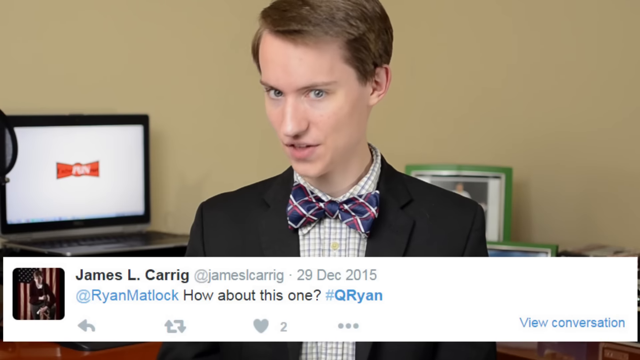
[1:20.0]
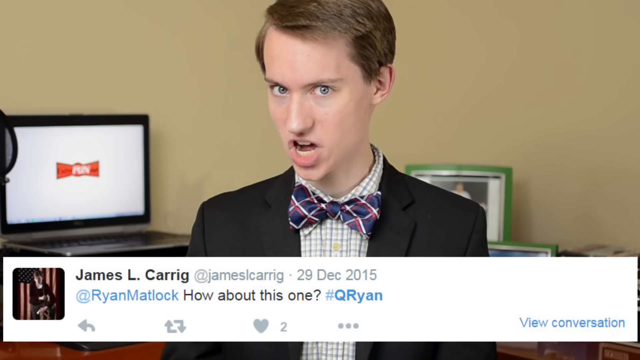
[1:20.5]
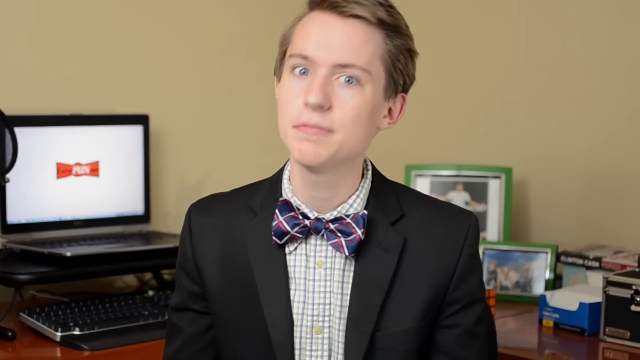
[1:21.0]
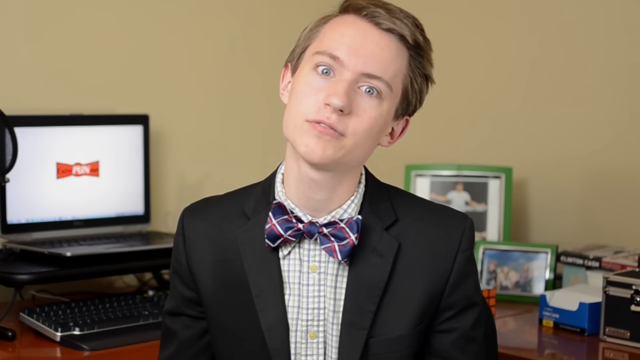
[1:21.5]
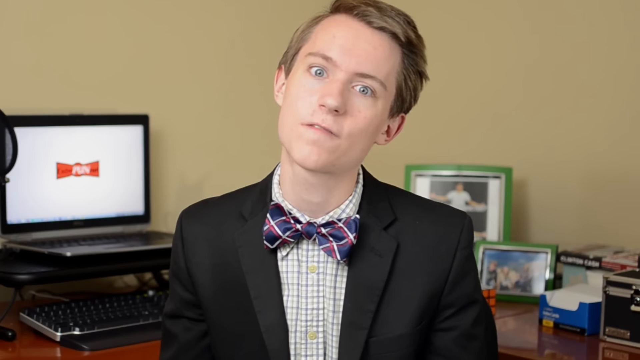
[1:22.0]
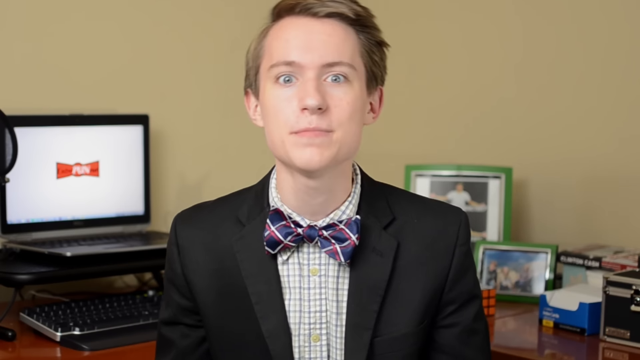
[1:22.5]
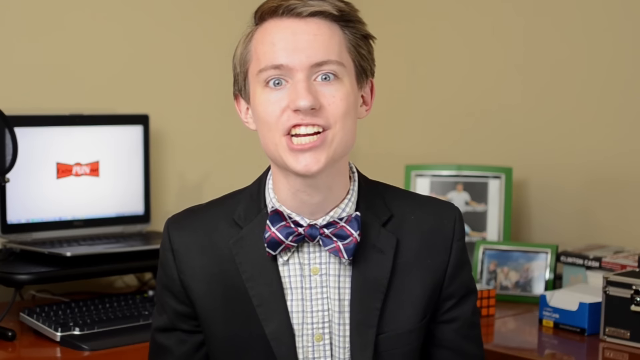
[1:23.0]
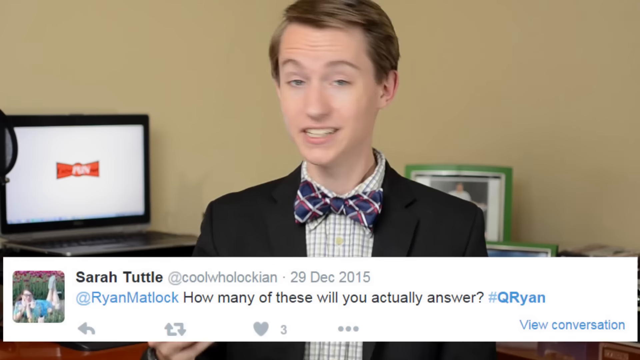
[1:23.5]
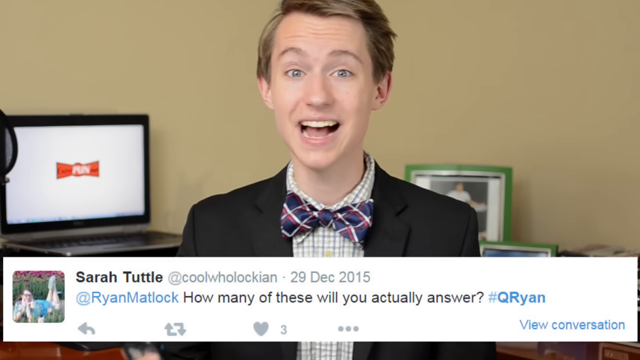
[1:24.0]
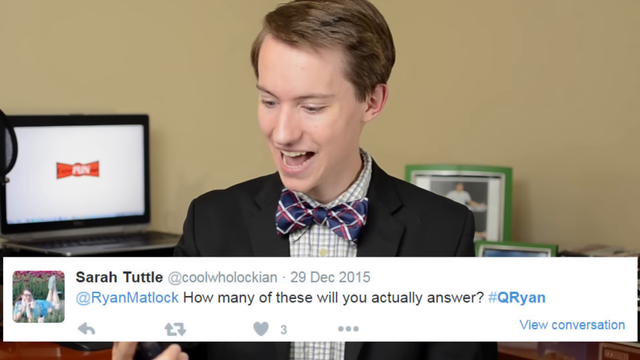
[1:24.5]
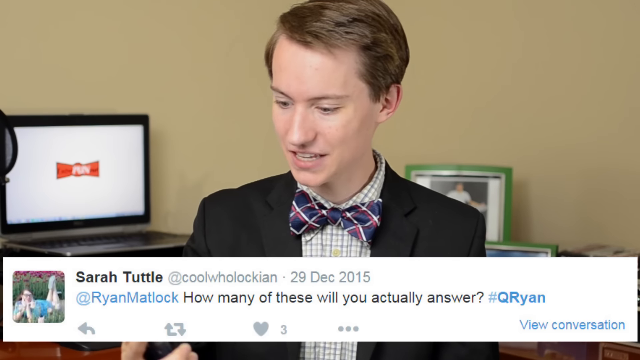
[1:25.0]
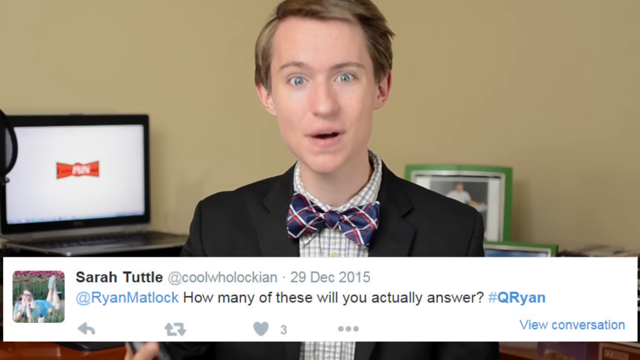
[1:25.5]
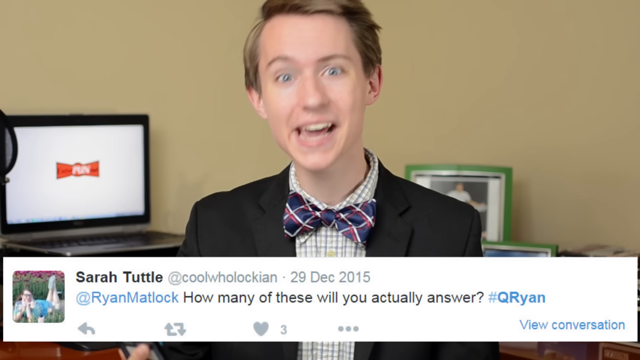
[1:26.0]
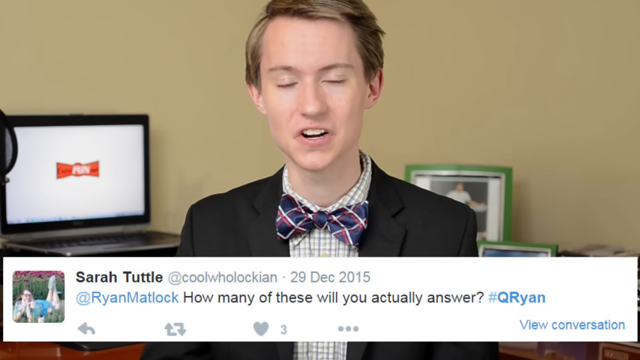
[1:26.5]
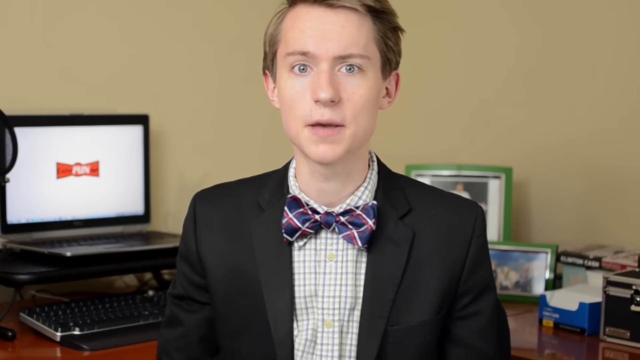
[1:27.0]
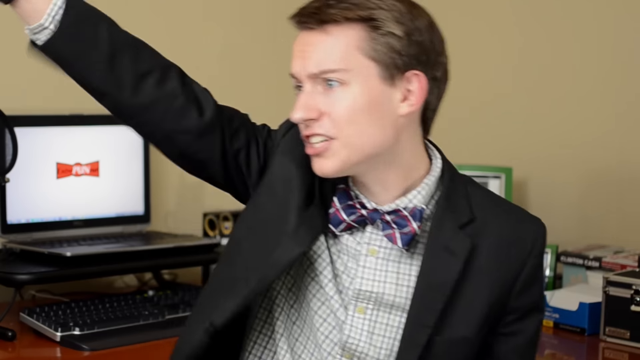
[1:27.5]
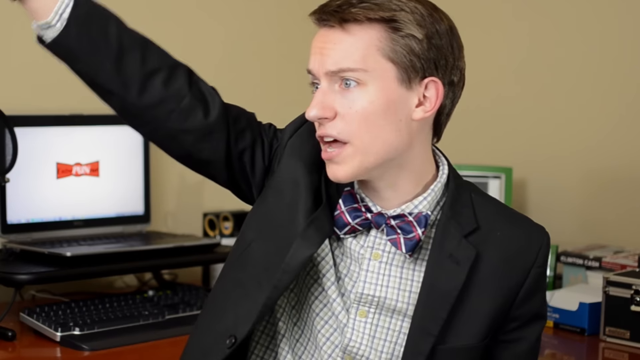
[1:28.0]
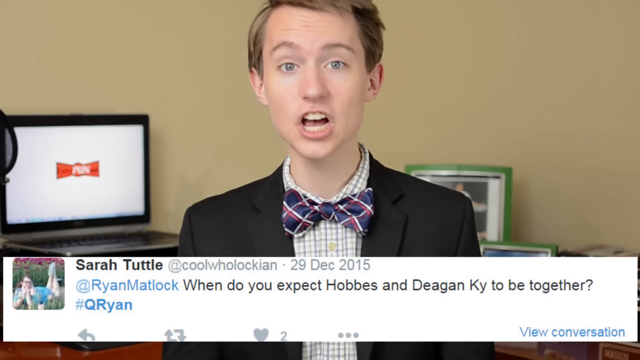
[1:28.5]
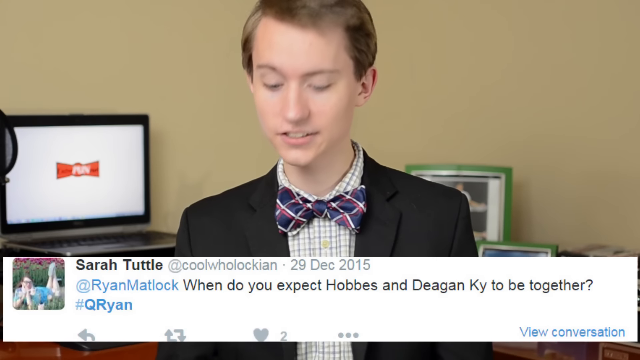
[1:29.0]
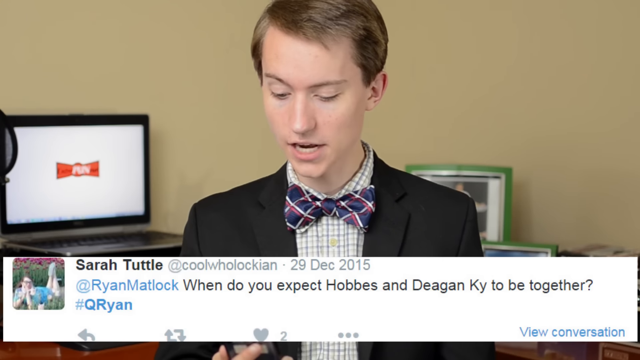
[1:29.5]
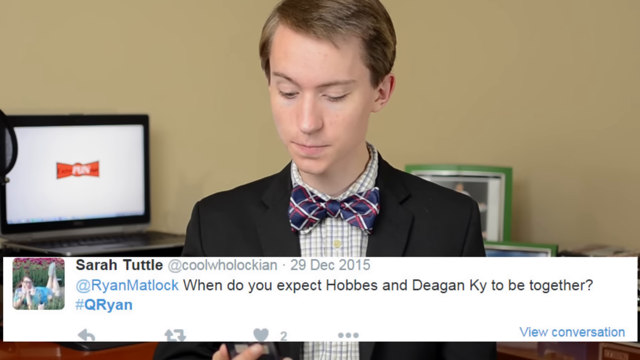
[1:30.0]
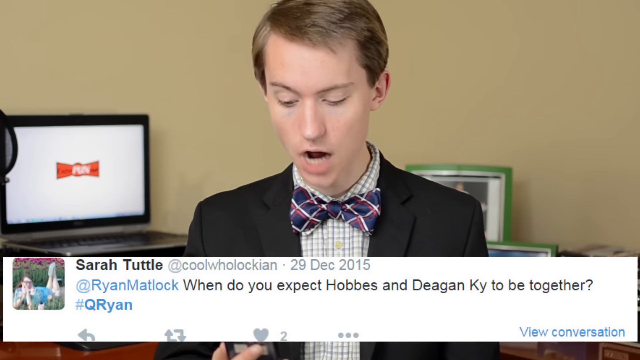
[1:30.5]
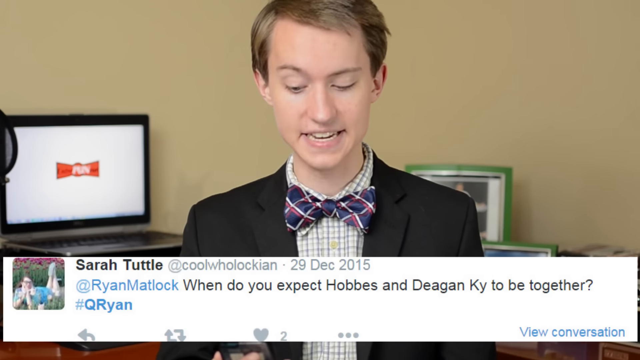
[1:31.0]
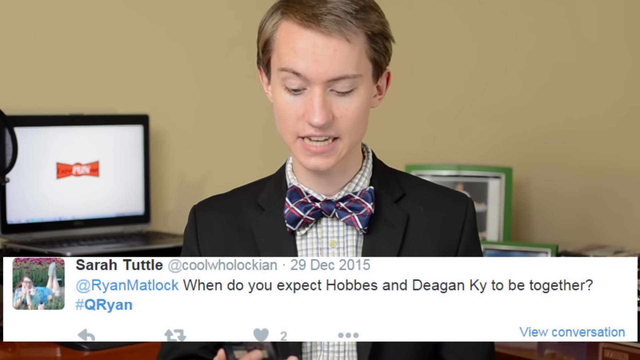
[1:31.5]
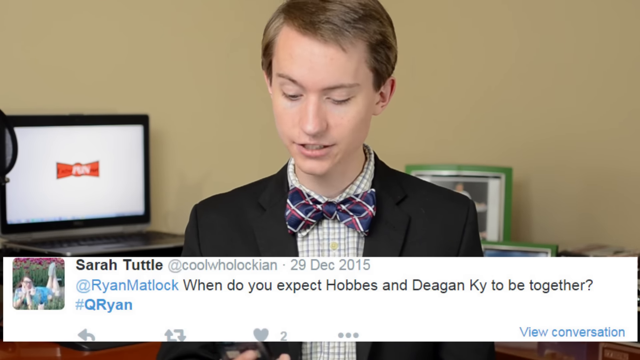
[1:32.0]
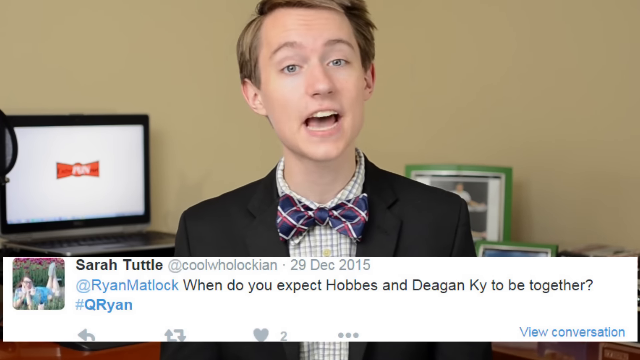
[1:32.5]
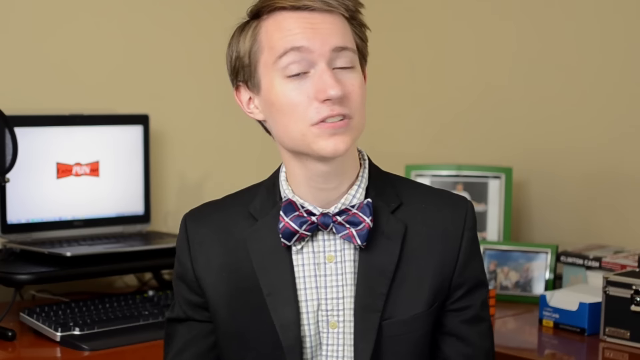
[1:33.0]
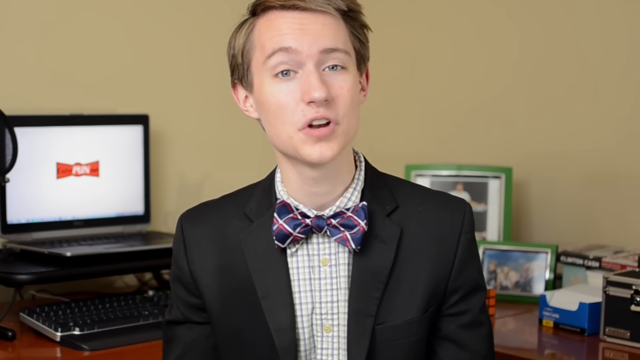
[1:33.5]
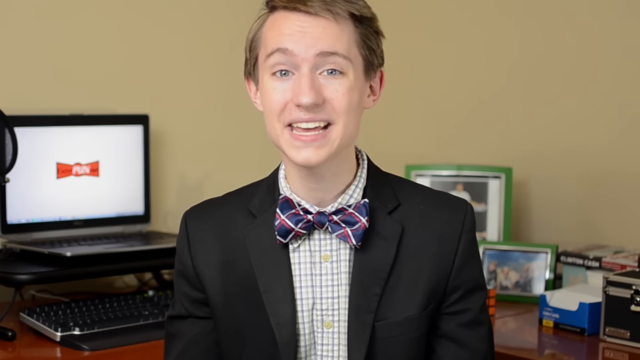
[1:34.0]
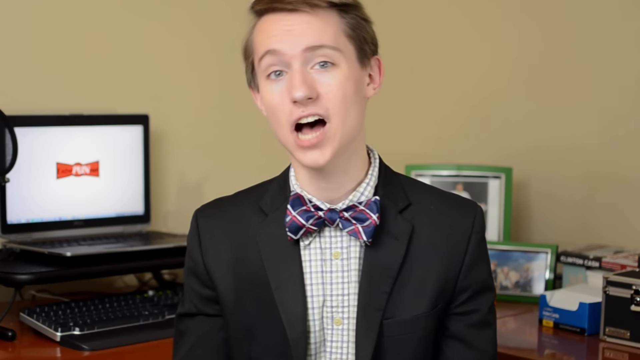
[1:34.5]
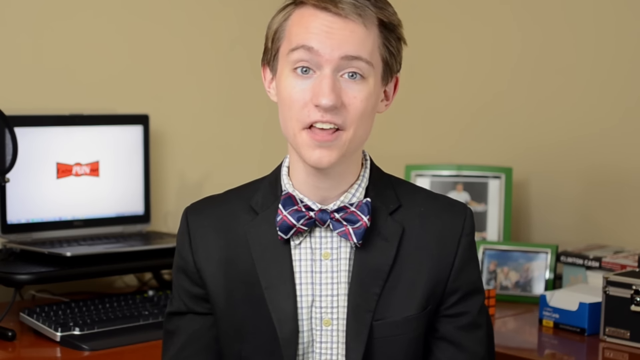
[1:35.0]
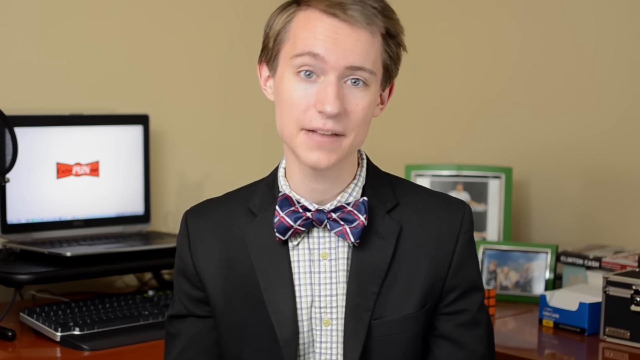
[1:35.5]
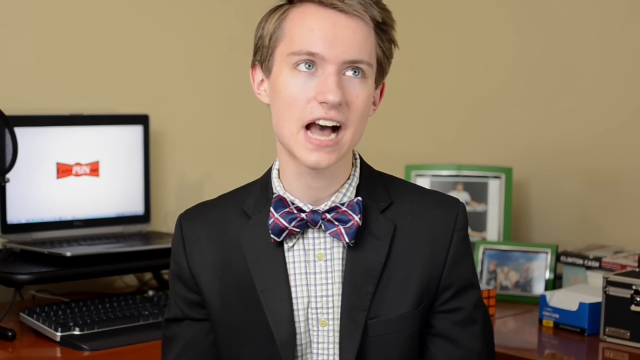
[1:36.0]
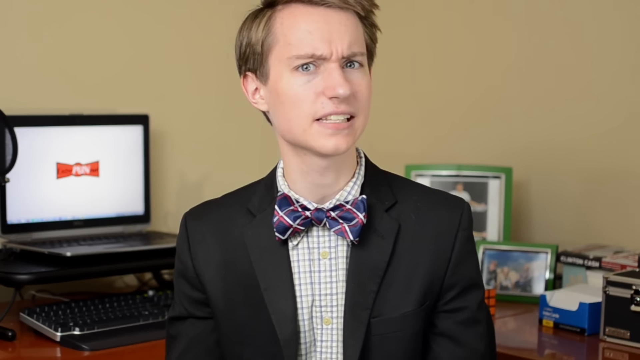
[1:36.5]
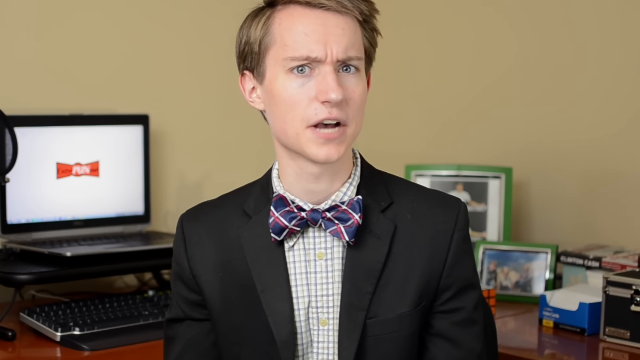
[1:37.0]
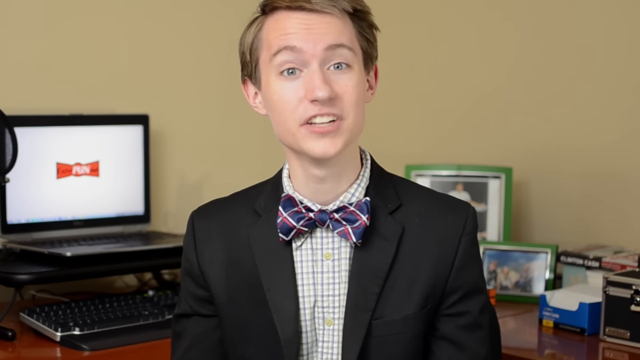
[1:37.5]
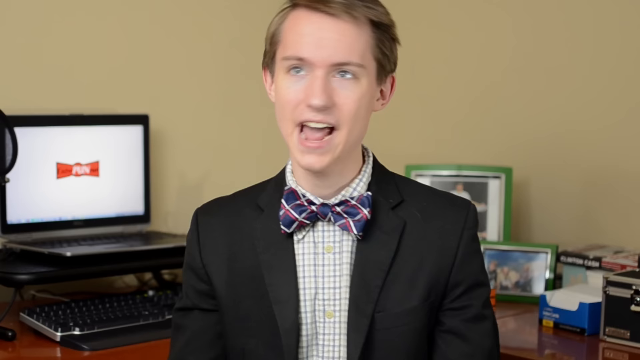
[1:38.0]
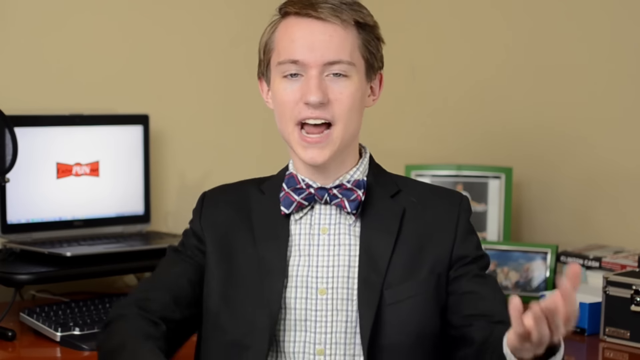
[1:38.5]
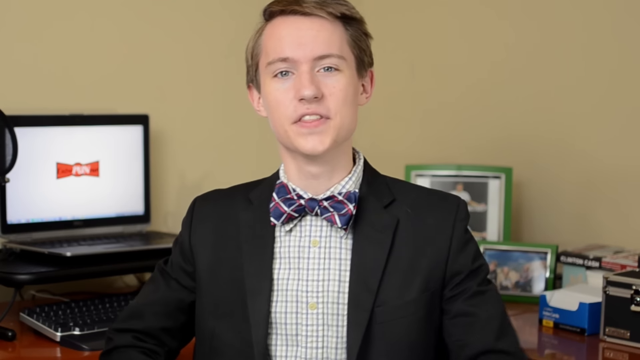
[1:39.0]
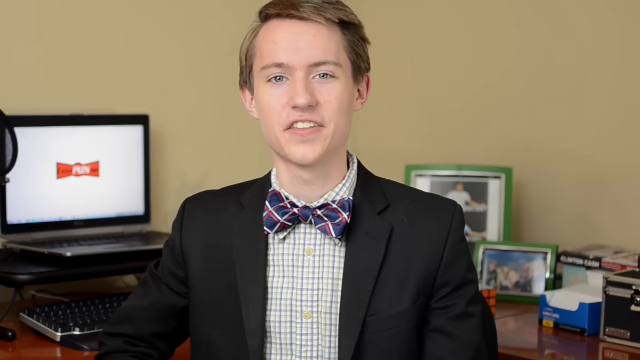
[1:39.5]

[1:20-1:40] In the same bedroom-like location, the man starts out looking downward to the bottom left with a very surprised expression. A white rectangular box covers the whole bottom of the frame horizontally, with a message from James L. Carrig that appears to read "how about this one?", and the post date, 29 December 2015, next to the name. The tweet disappears as the man looks directly at the camera with a very expressive, kind of angered face. Another tweet appears at the bottom from Sarah Tuttle, asking "how many of these will you actually answer?" He looks down to the left to read it, holding his phone in his right hand, and raises his right hand in a kind of salute, slightly off camera. Another tweet from Sarah Tuttle appears at the bottom: "when do you expect Hobbs and Deegan, KY, to be together?" He reads it on his phone, holding it in his right hand.